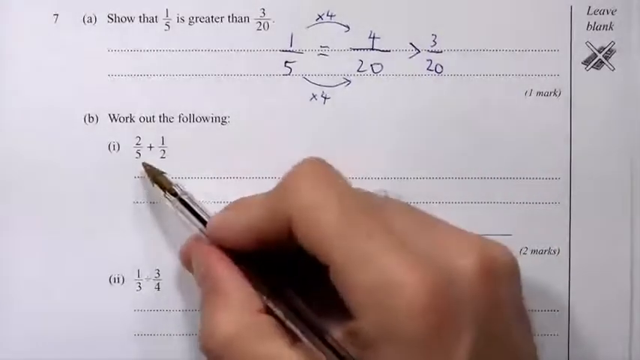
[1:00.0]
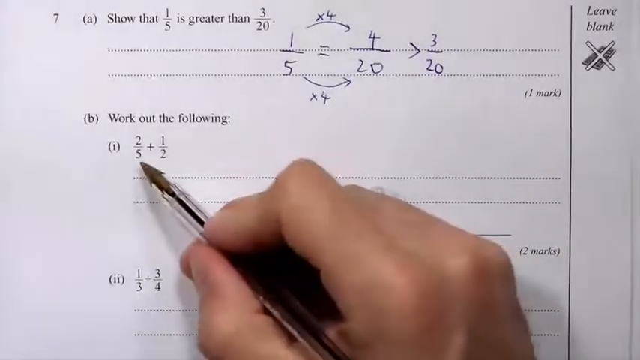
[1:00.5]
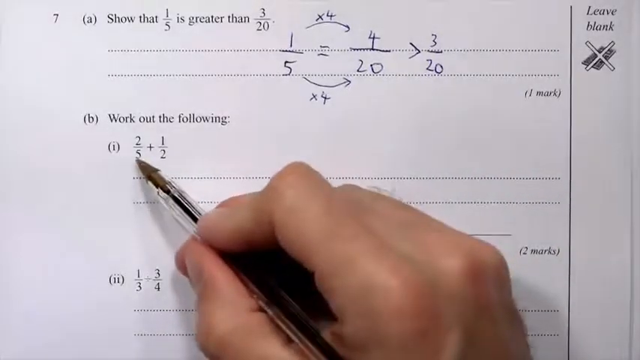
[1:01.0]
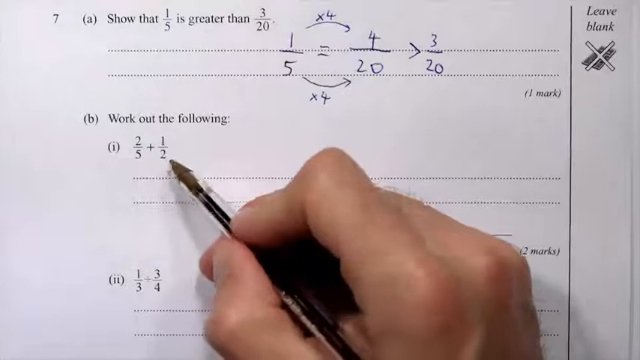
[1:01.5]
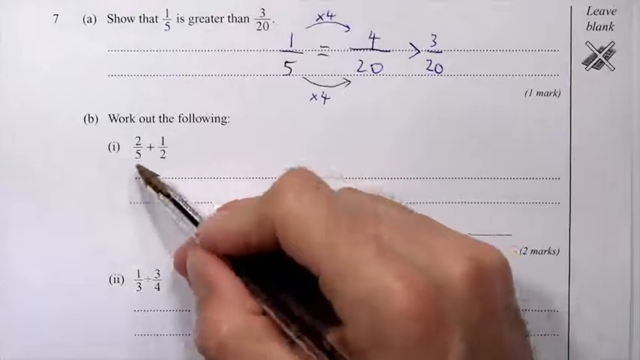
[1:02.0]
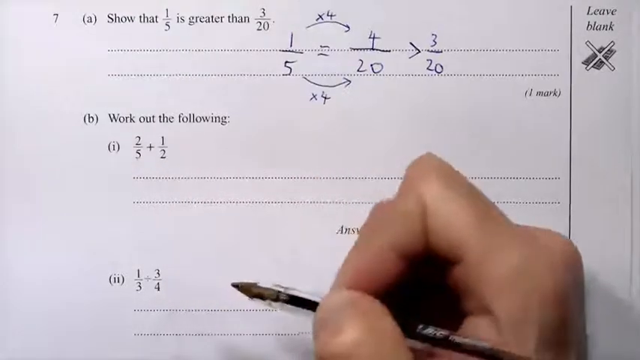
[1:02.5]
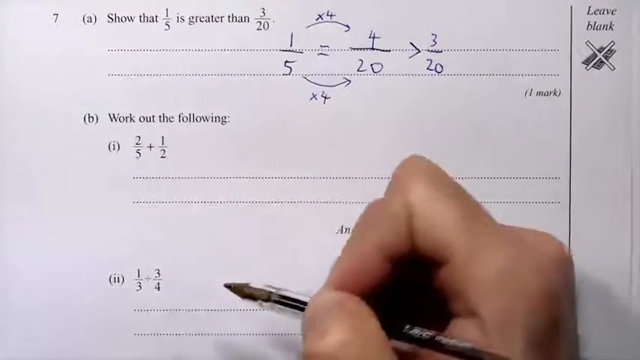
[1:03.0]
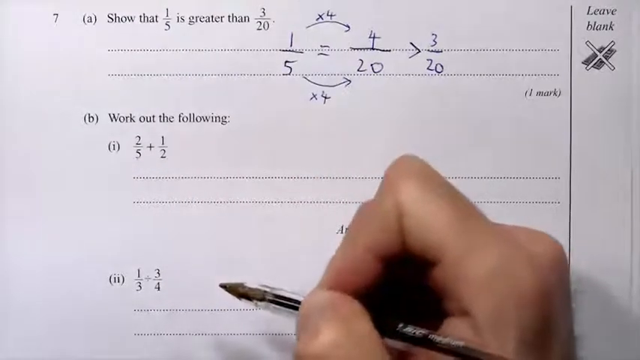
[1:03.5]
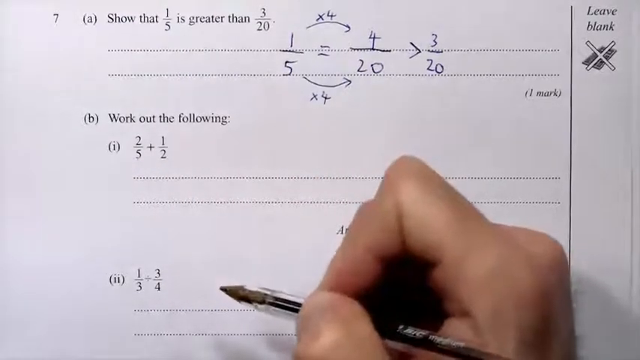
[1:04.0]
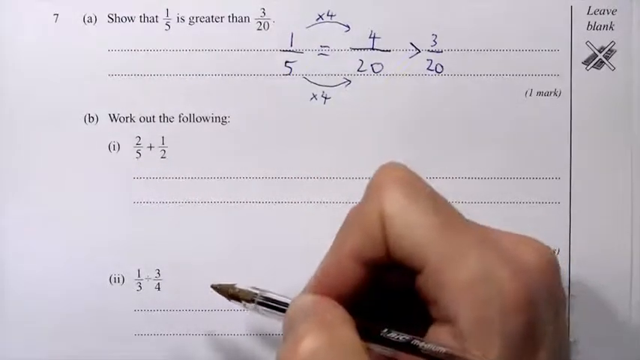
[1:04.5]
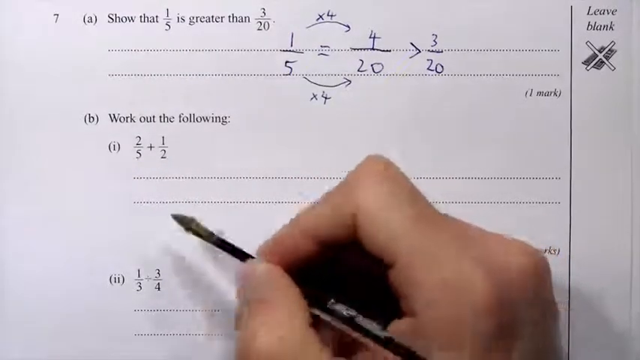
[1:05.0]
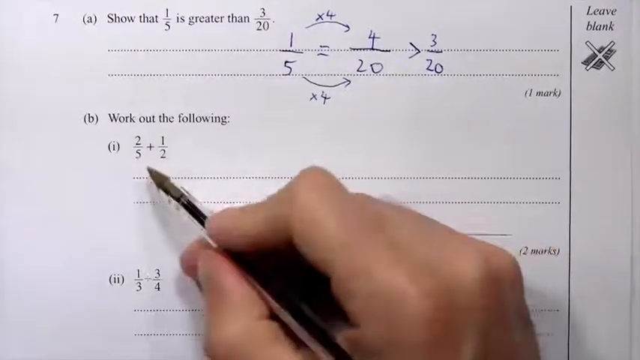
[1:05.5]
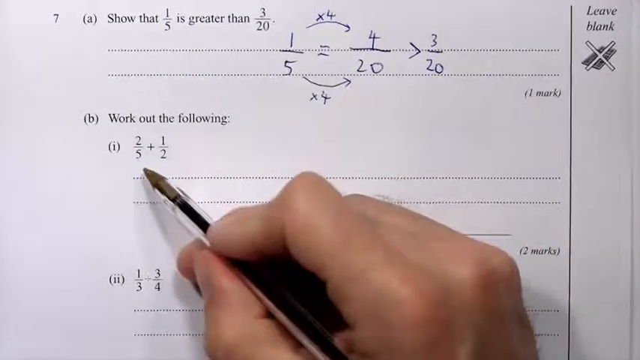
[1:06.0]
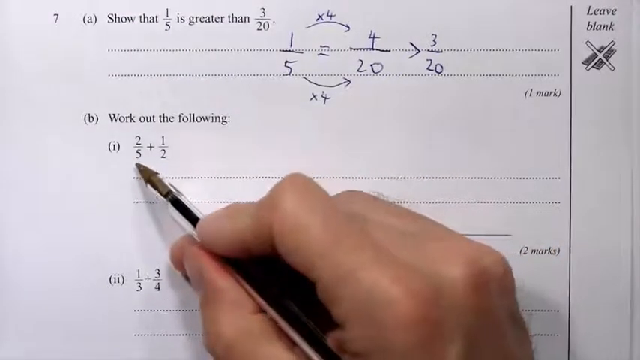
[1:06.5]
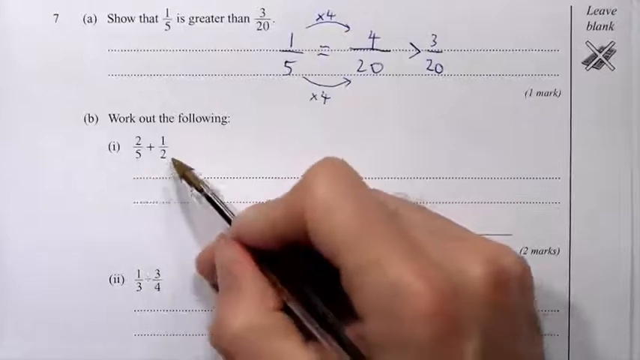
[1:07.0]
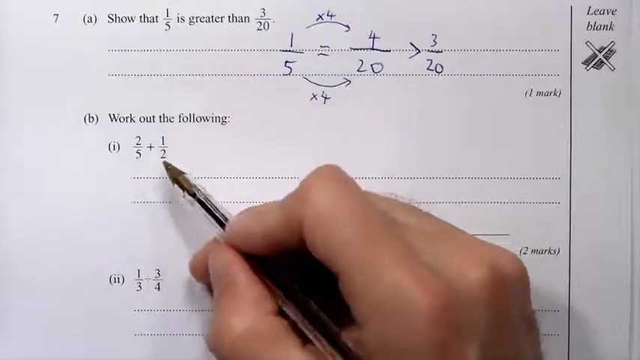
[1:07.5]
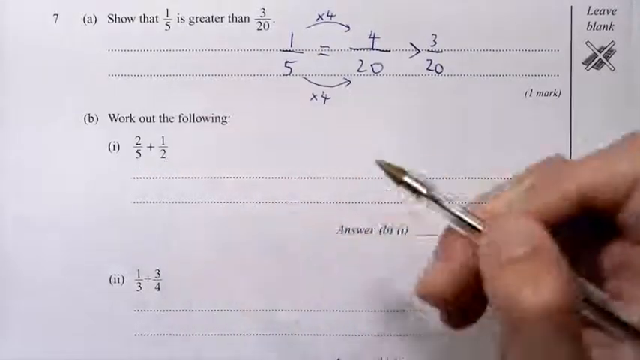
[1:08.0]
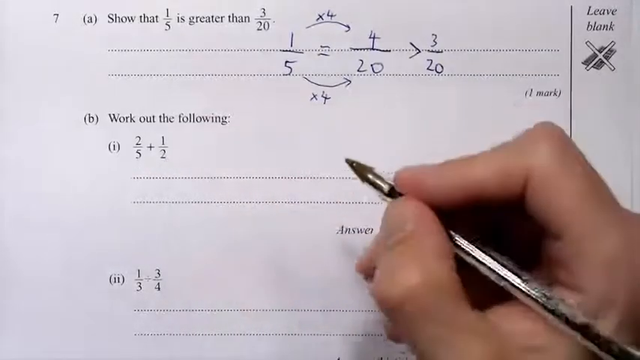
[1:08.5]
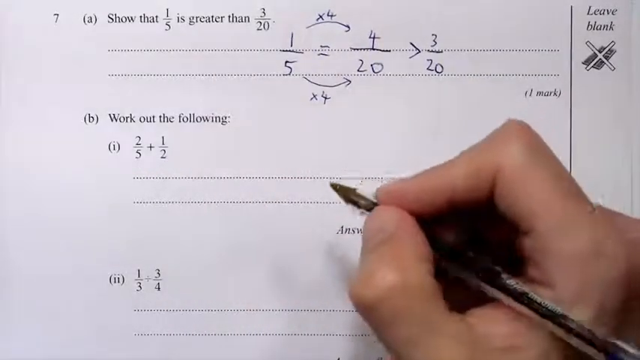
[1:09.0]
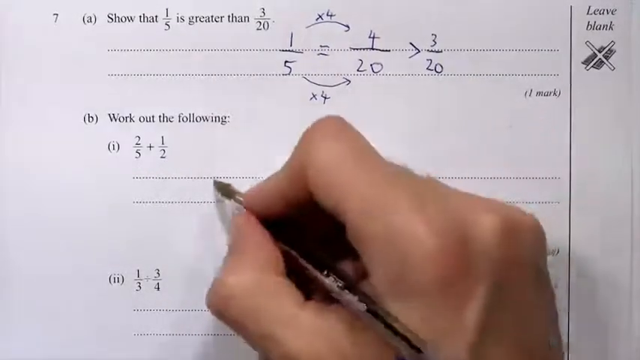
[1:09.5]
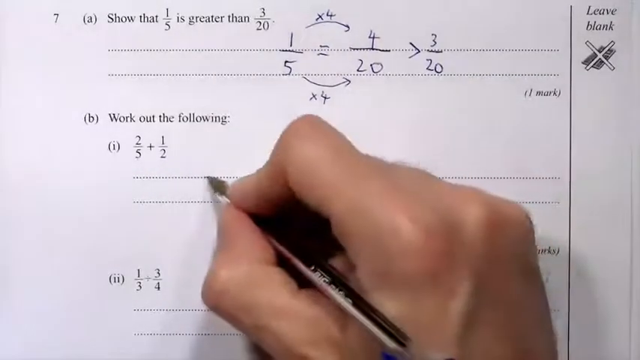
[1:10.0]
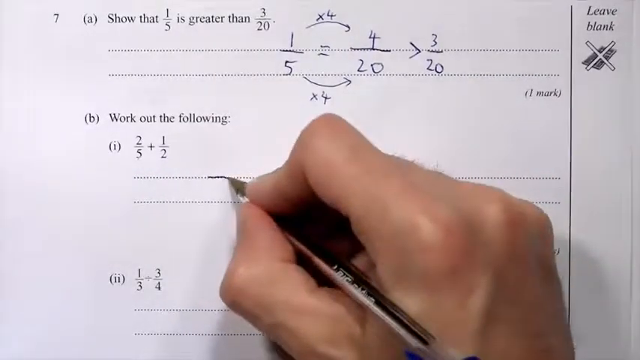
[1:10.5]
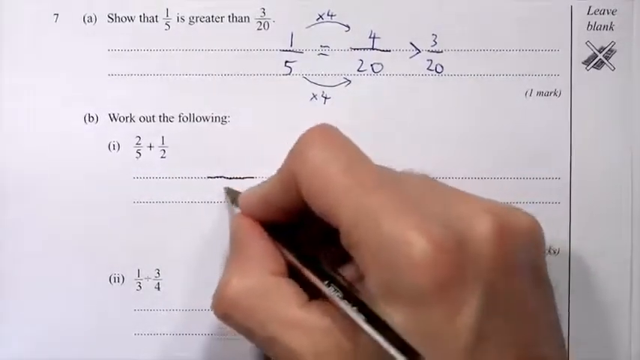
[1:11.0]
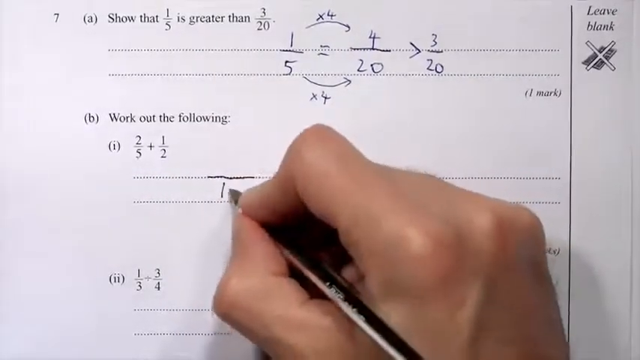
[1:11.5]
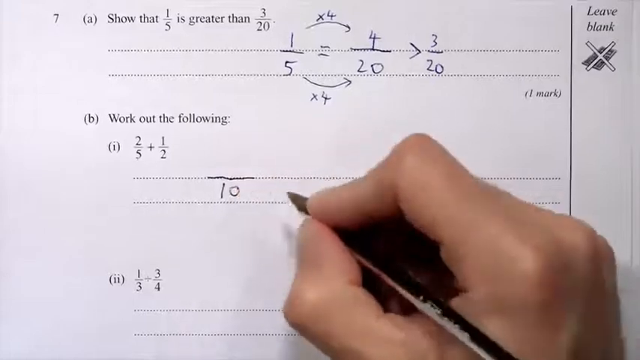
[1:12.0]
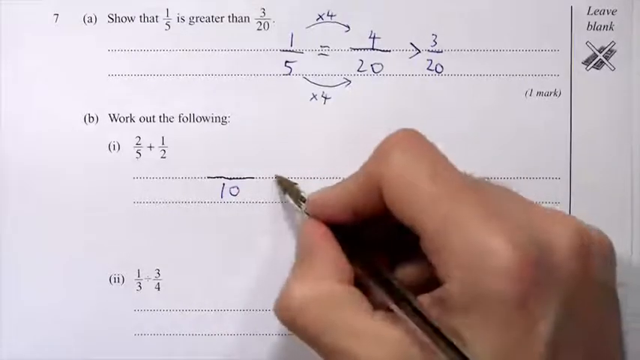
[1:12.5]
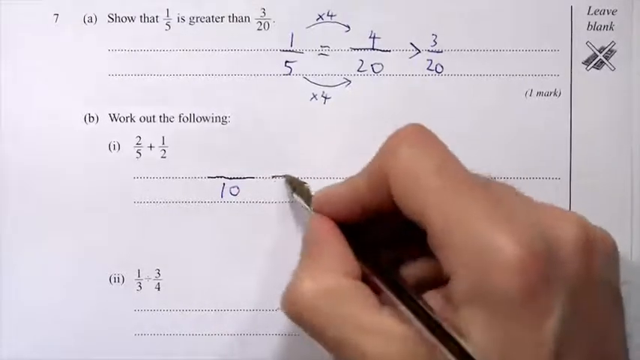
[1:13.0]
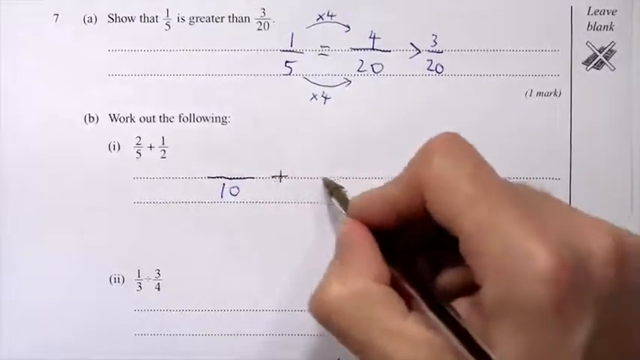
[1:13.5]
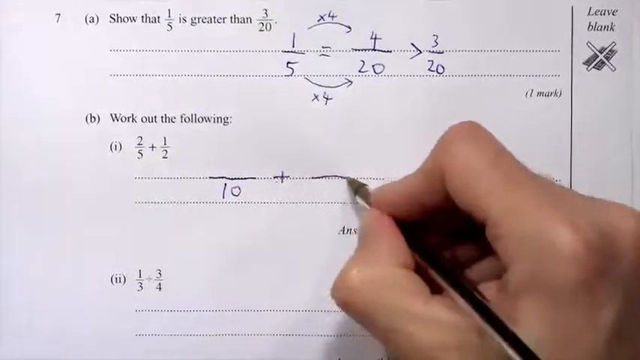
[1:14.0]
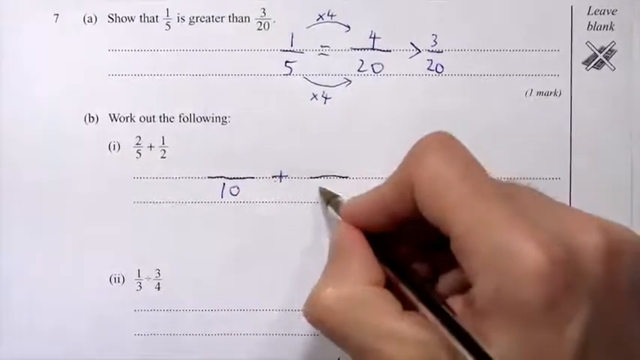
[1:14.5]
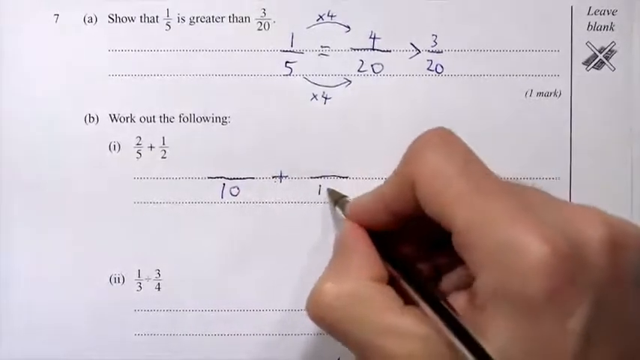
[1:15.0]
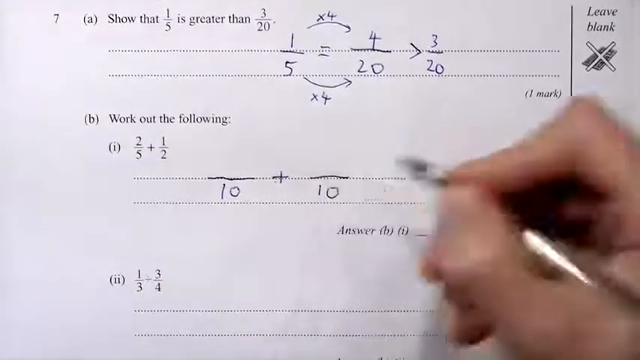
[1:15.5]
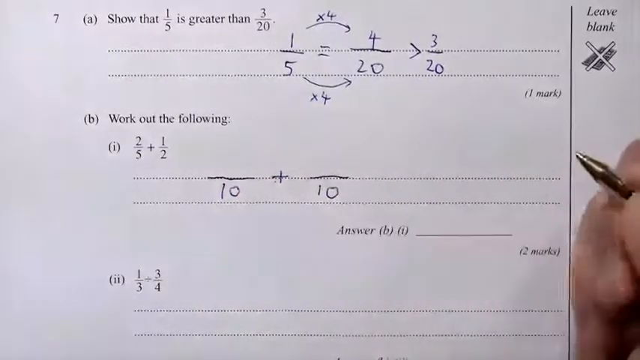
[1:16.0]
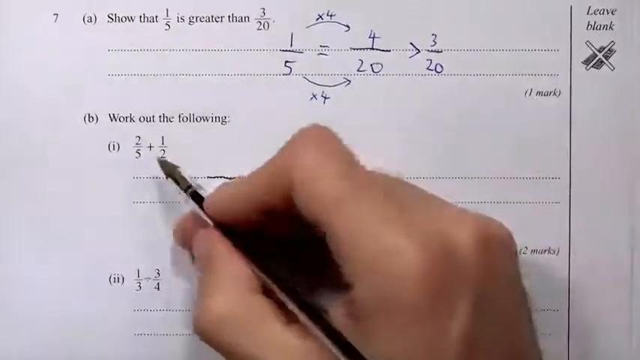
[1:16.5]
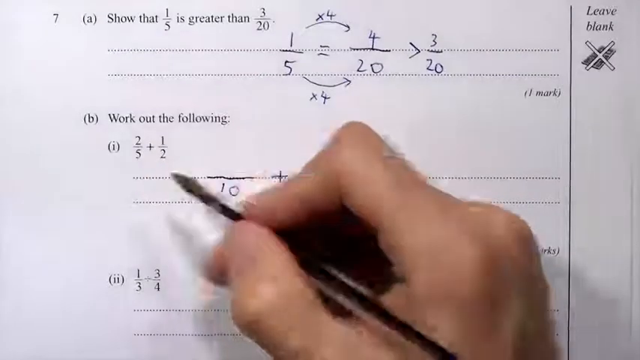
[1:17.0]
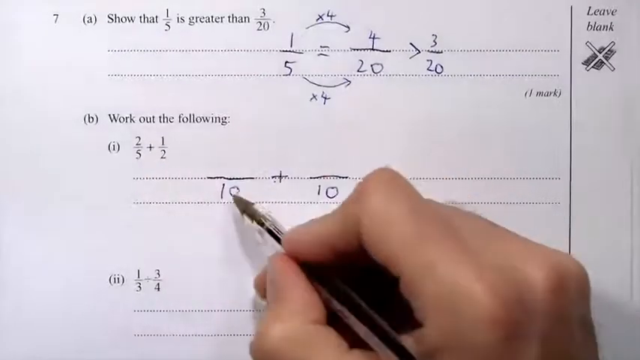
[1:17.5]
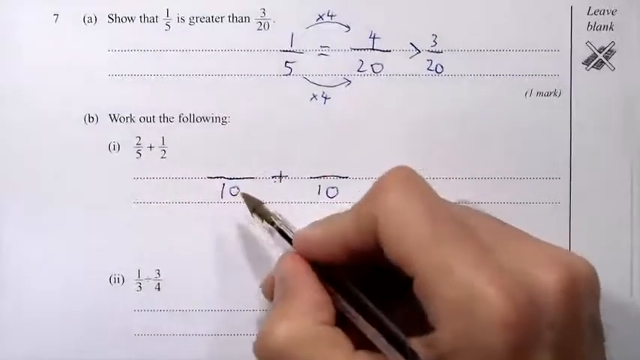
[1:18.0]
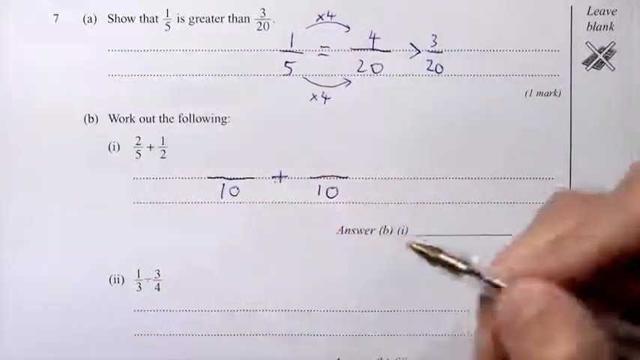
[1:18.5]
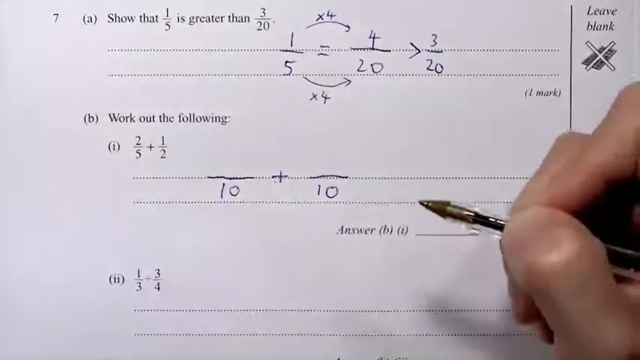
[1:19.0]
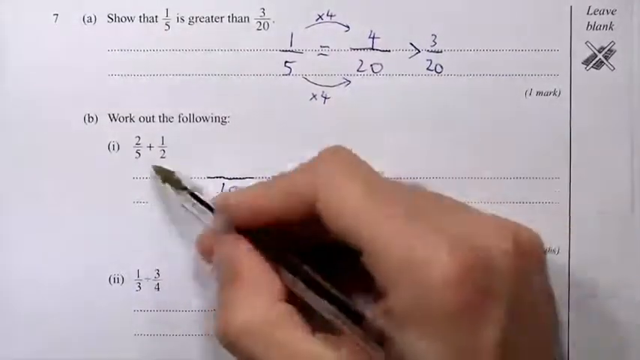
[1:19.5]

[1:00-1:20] The second problem, 7b, is 2/5 plus 1/2. To add them, a common denominator is found: for 5 and 2 the lowest common denominator is 10, and the fractions are rewritten with 10 on the bottom.